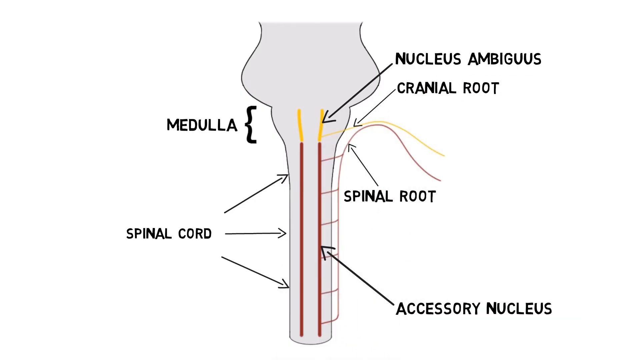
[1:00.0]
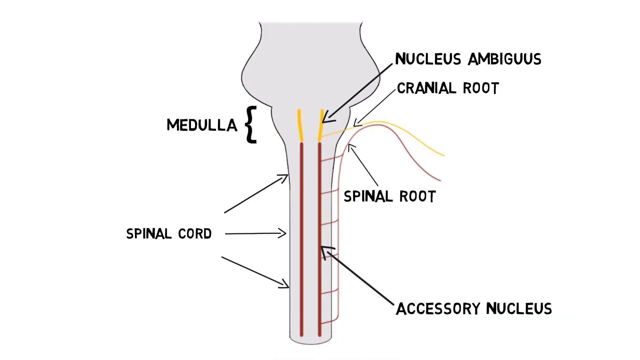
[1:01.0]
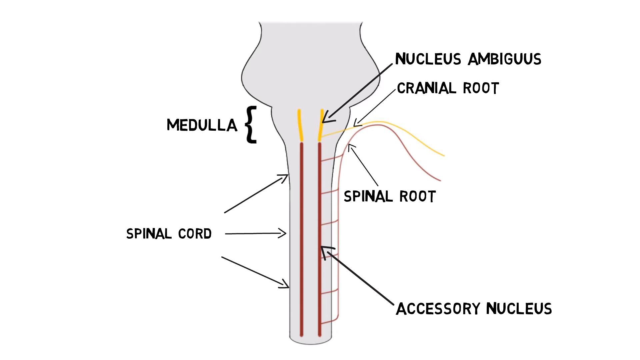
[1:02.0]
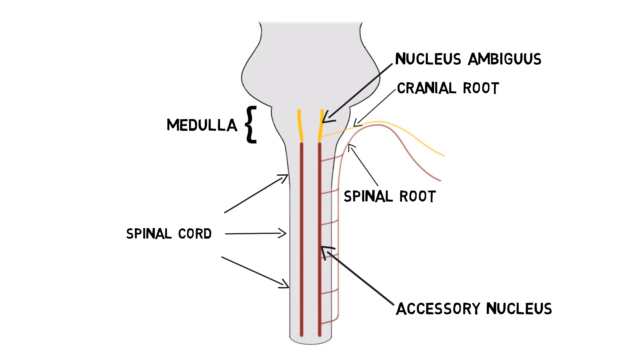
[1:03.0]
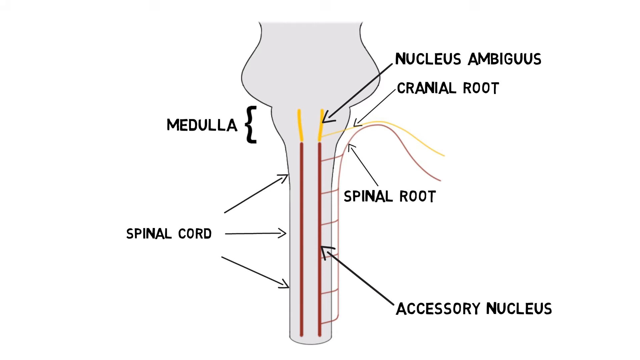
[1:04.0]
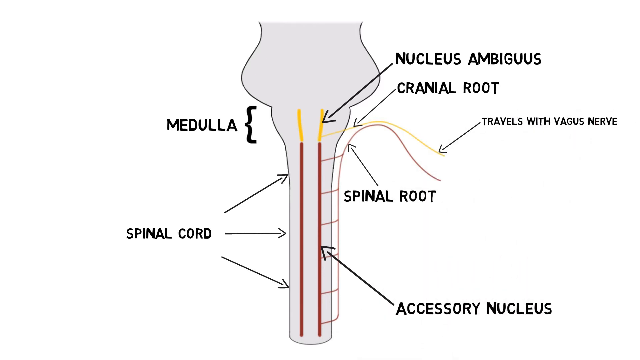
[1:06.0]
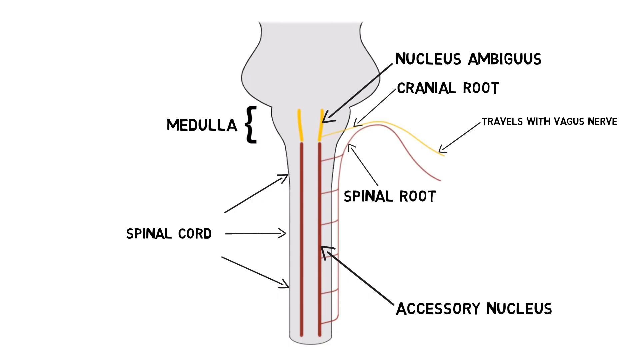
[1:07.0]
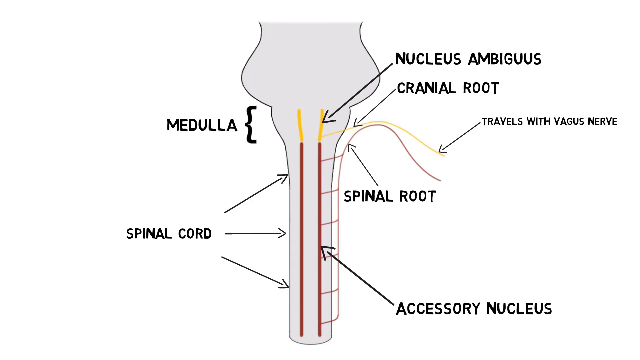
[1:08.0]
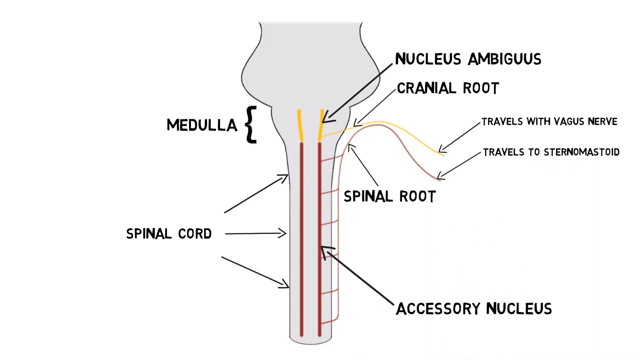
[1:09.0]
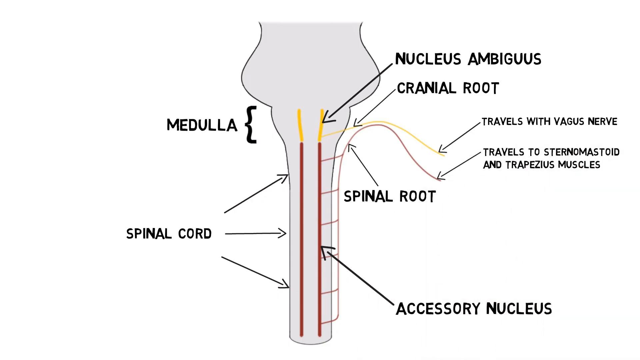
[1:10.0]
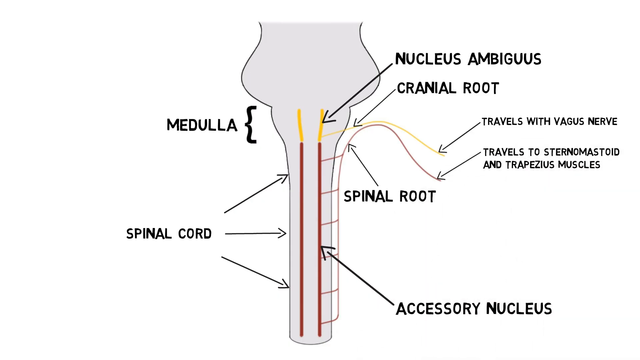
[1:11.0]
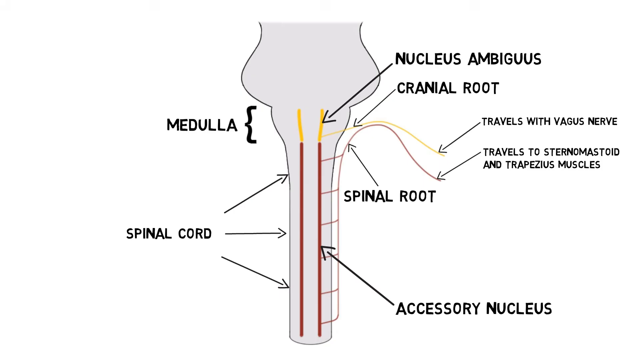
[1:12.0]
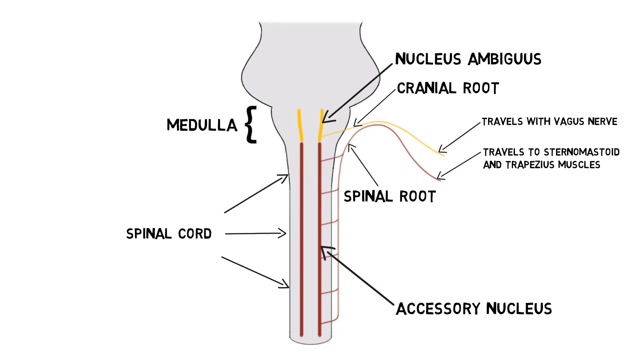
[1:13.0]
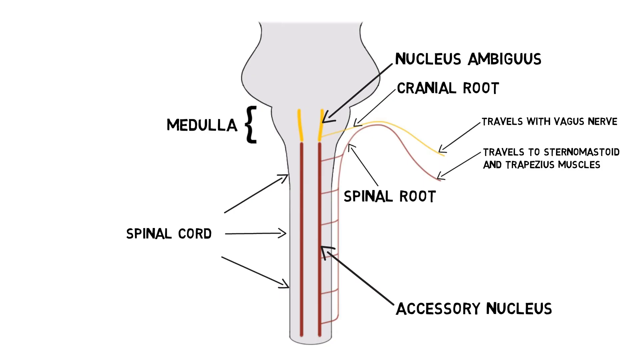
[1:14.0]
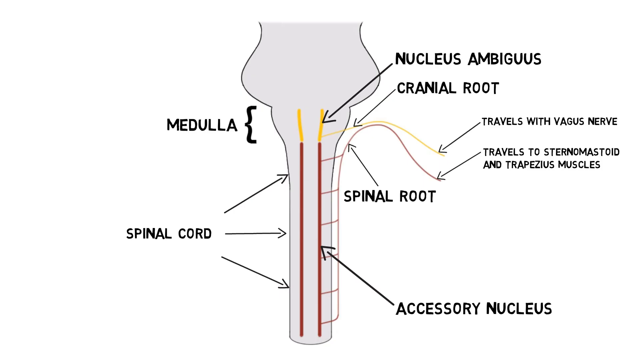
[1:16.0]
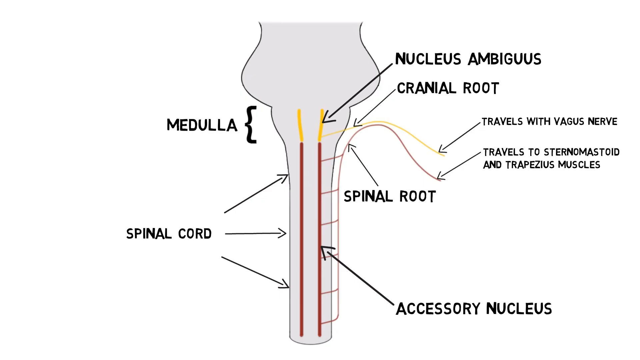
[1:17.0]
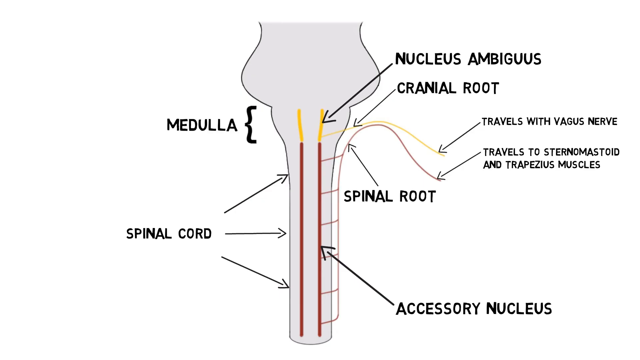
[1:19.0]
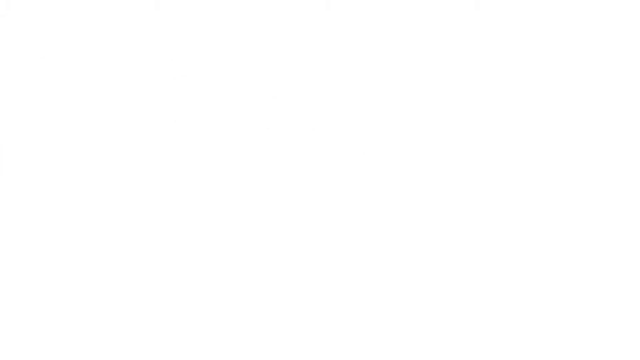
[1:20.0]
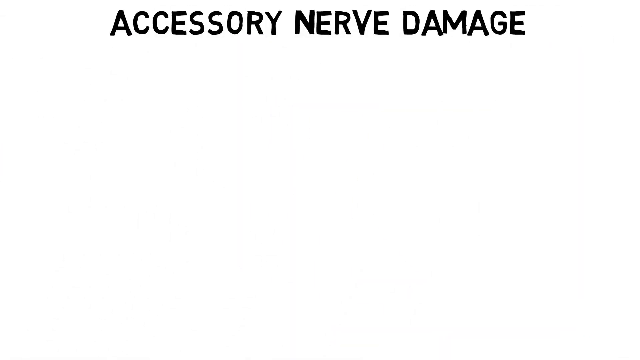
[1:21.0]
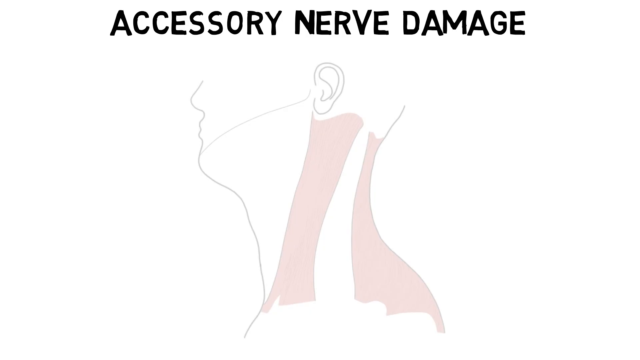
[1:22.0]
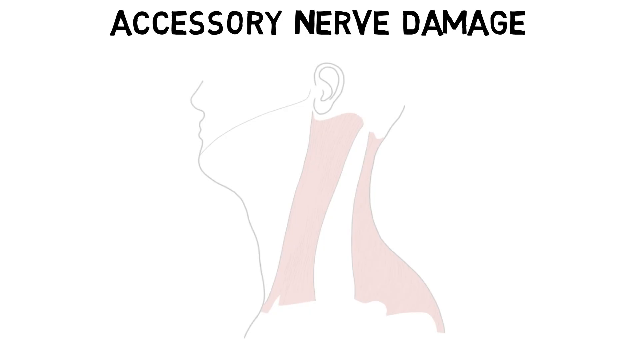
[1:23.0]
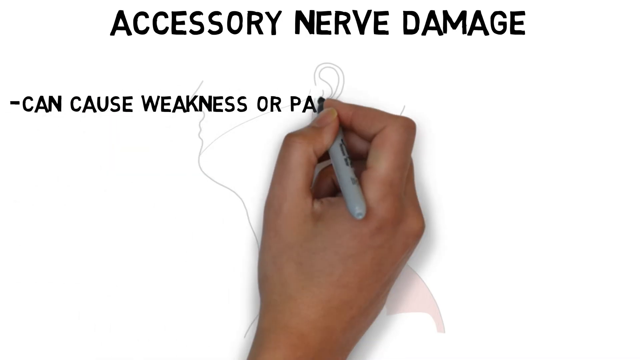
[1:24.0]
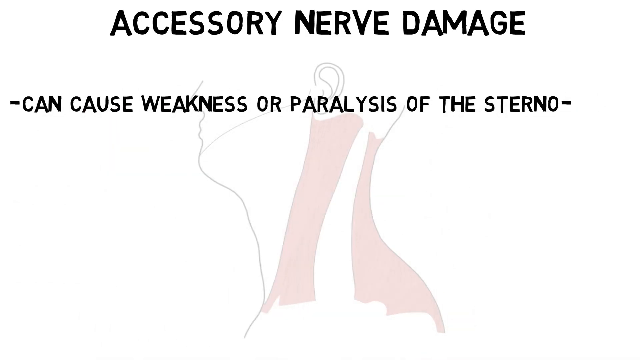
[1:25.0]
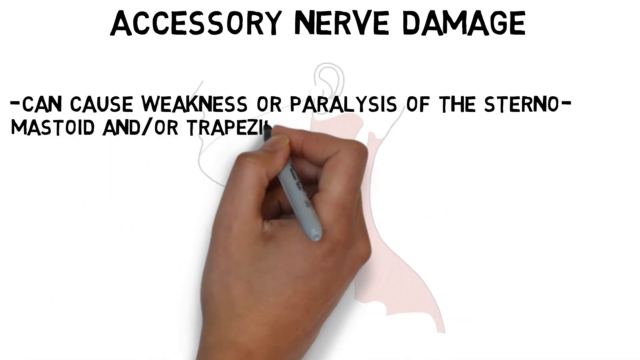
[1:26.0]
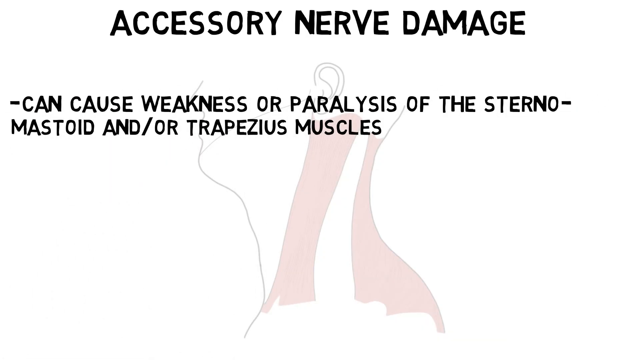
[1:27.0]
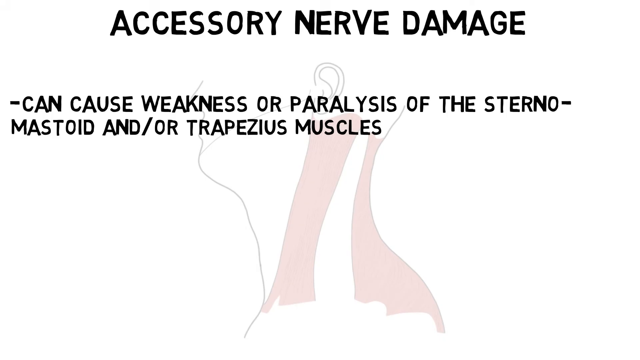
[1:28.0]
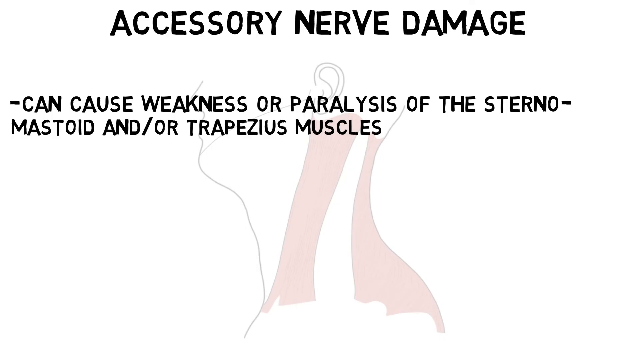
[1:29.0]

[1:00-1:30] The labeled drawing of the back continues, and more is added to it. Two labels are placed on a yellow line: "Cranial Root" and "travels with Vegas Nerve." The yellow stays within the medulla area. A red line is then added running up and down the spinal cord, labeled "travels to sternomastoid and Trapezius Muscles." The video then moves to "Accessory Nerve Damage," with text saying it can cause weakness or paralysis of the "SternalMastoid and or Trapezius Muscle."